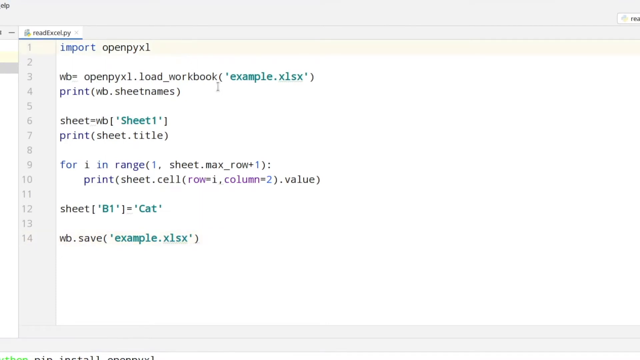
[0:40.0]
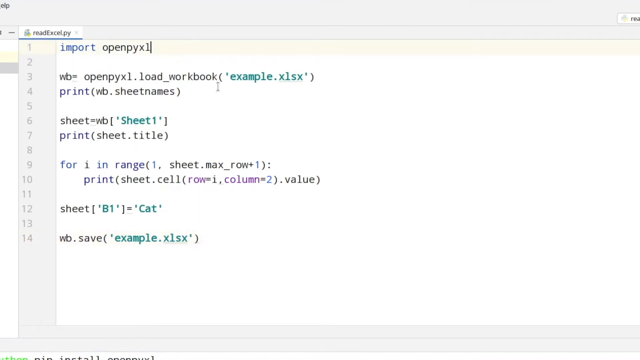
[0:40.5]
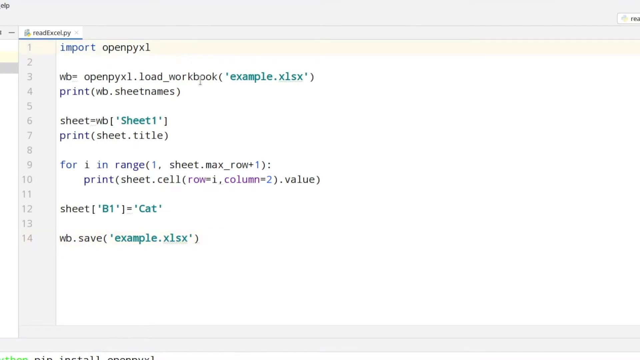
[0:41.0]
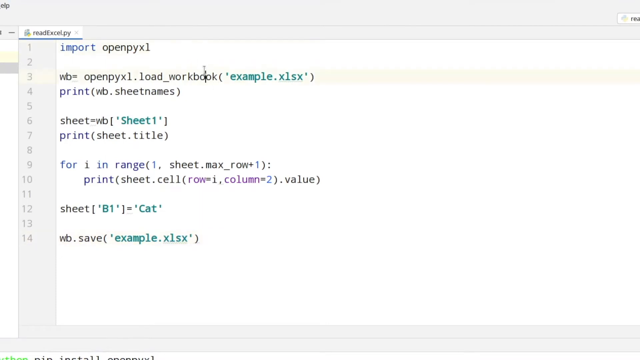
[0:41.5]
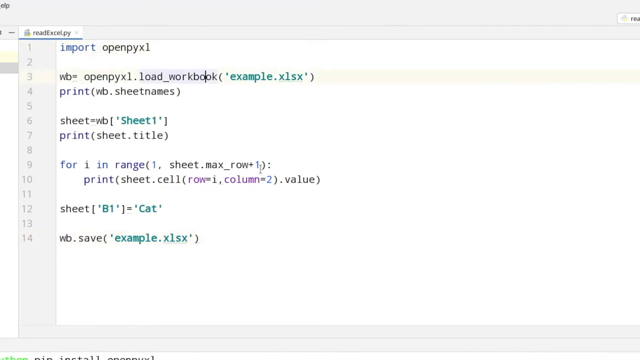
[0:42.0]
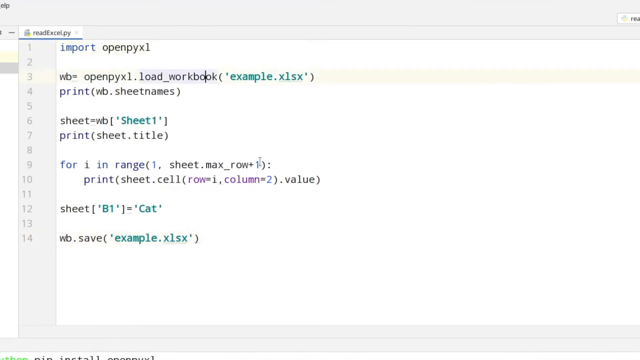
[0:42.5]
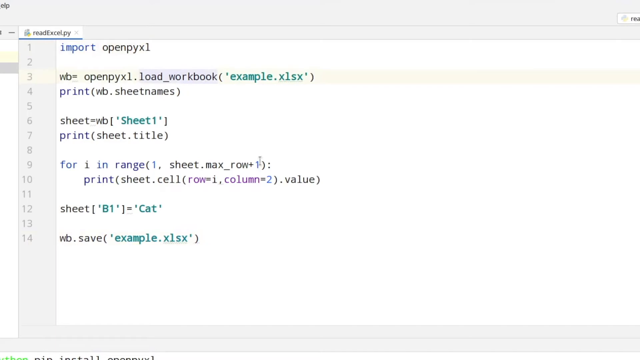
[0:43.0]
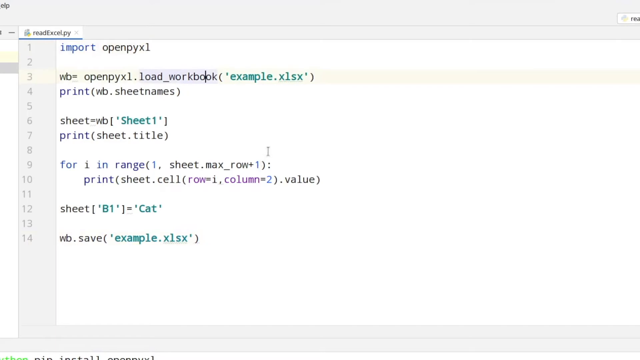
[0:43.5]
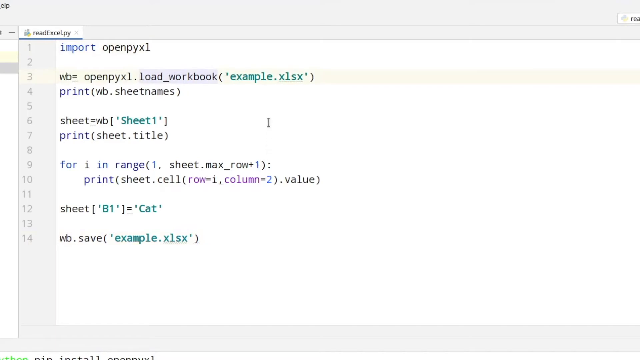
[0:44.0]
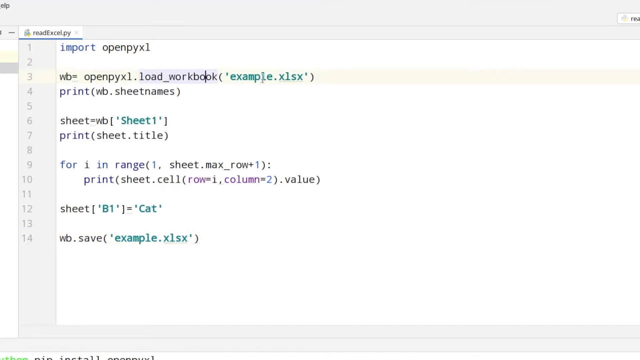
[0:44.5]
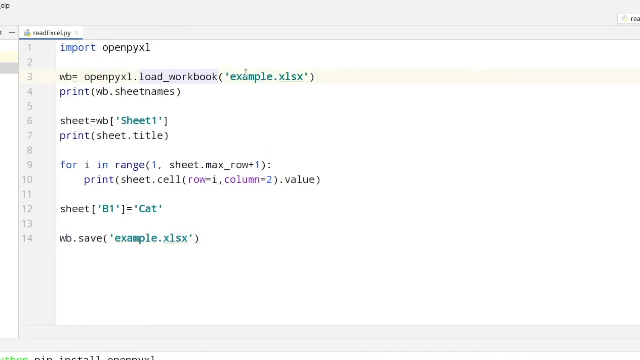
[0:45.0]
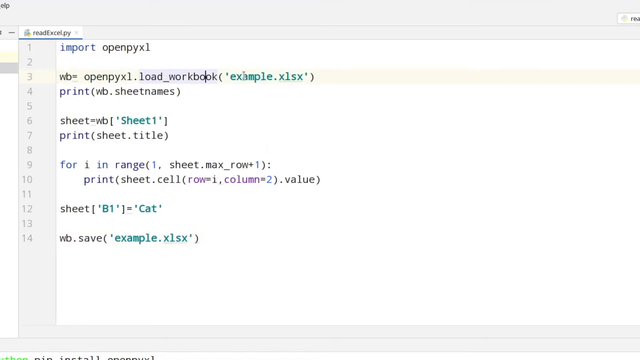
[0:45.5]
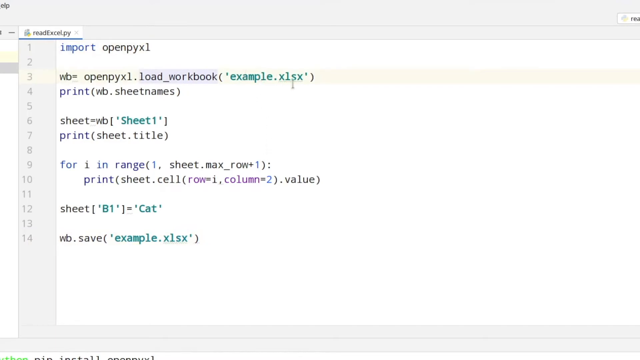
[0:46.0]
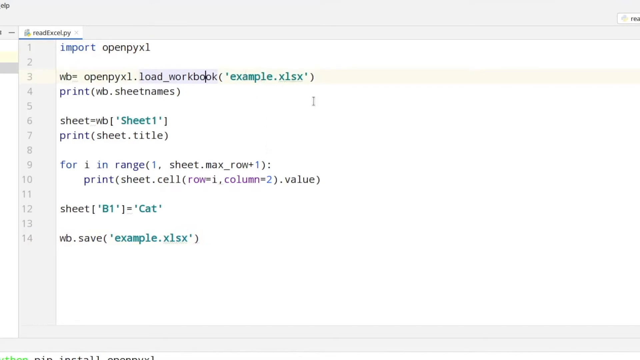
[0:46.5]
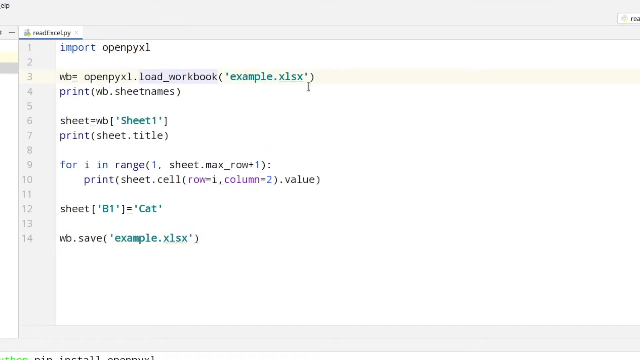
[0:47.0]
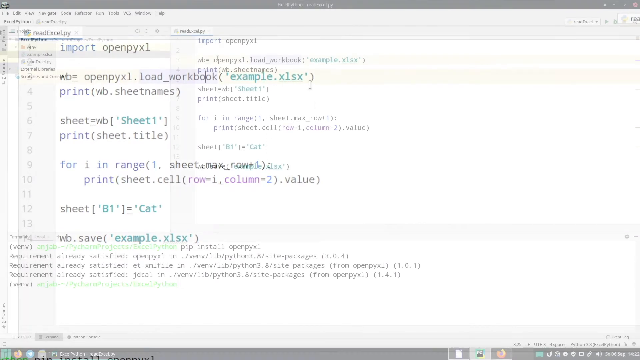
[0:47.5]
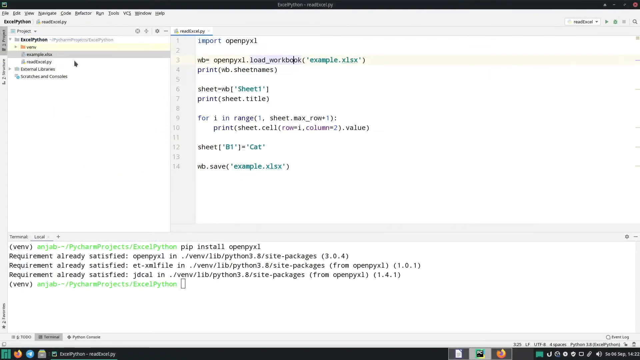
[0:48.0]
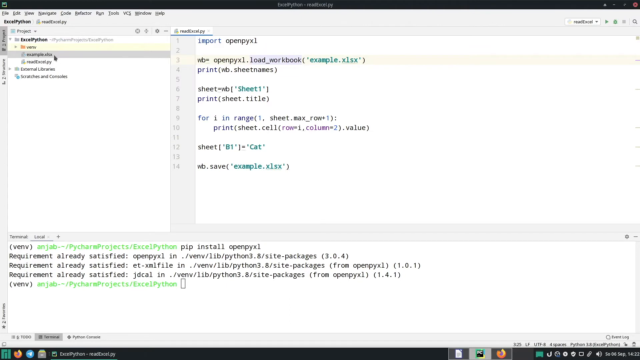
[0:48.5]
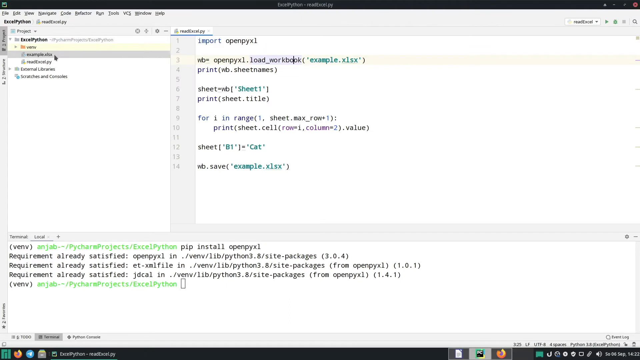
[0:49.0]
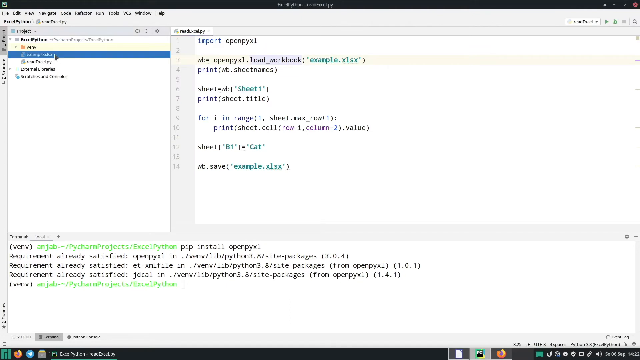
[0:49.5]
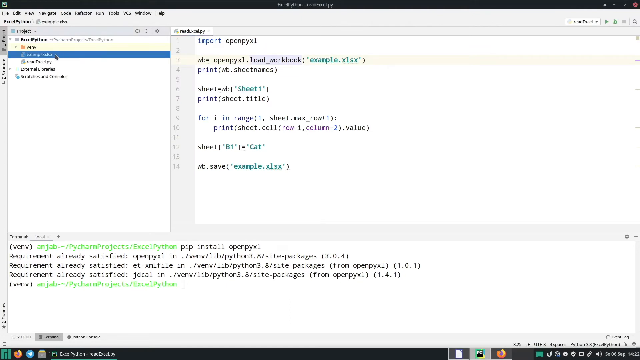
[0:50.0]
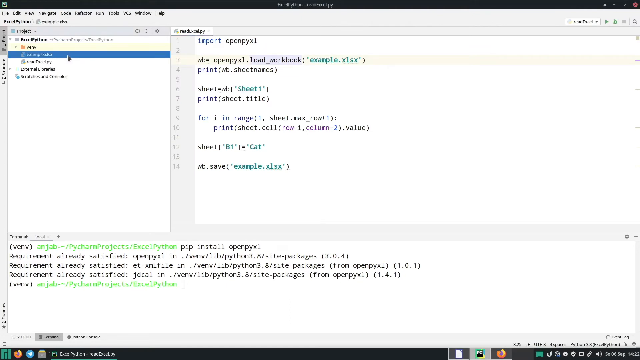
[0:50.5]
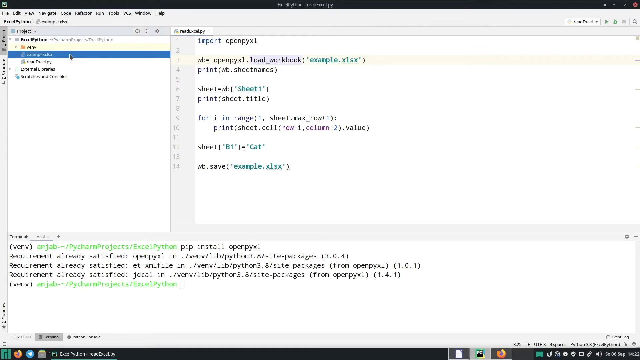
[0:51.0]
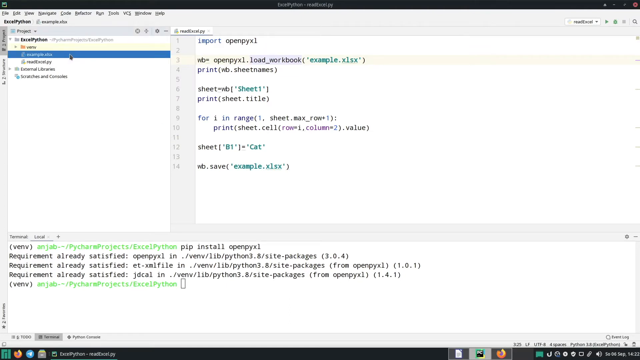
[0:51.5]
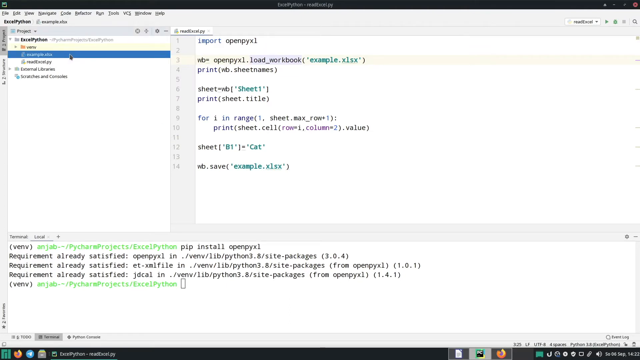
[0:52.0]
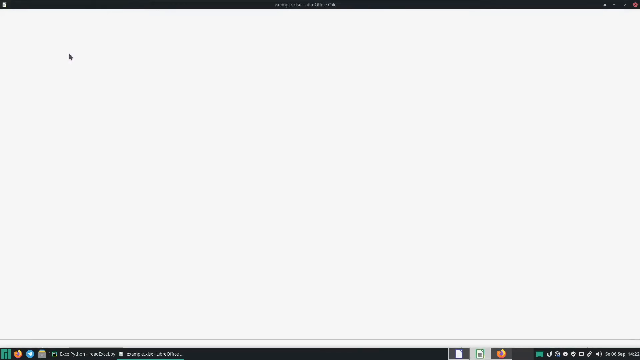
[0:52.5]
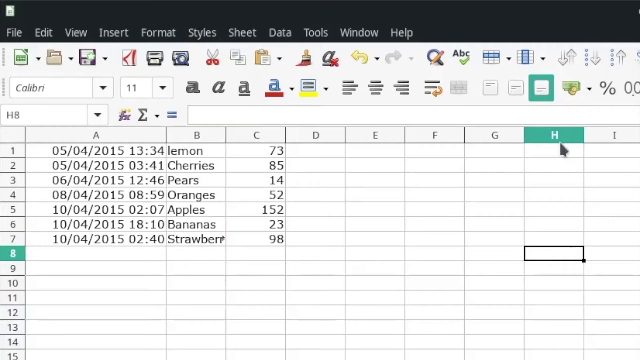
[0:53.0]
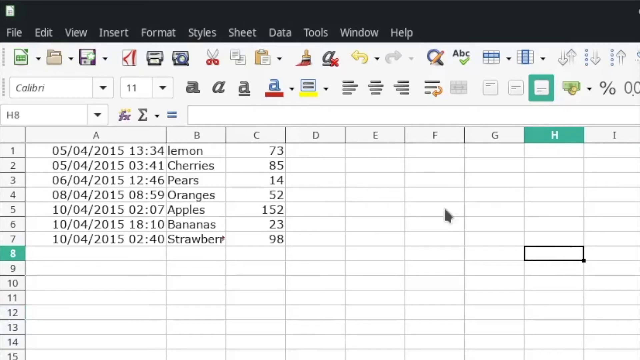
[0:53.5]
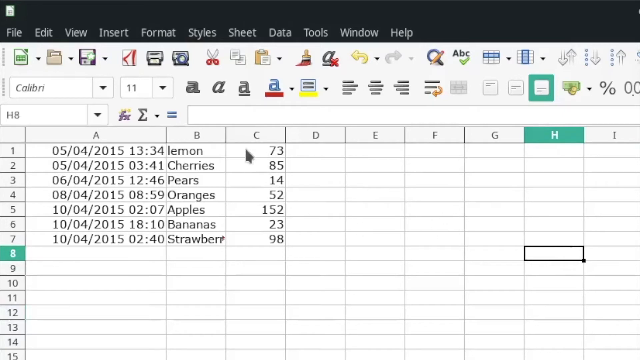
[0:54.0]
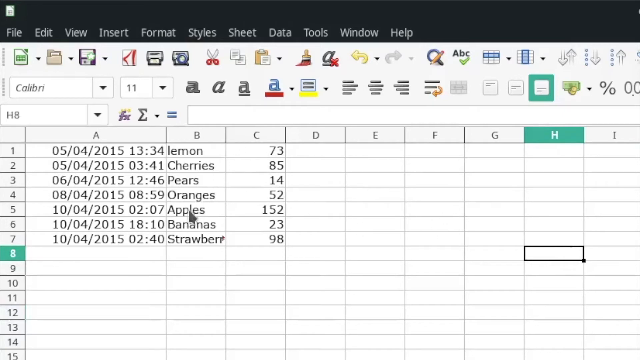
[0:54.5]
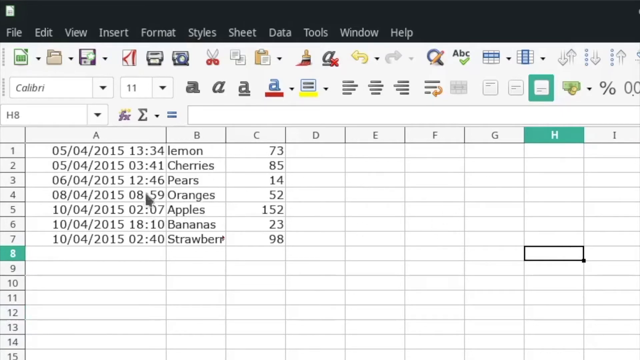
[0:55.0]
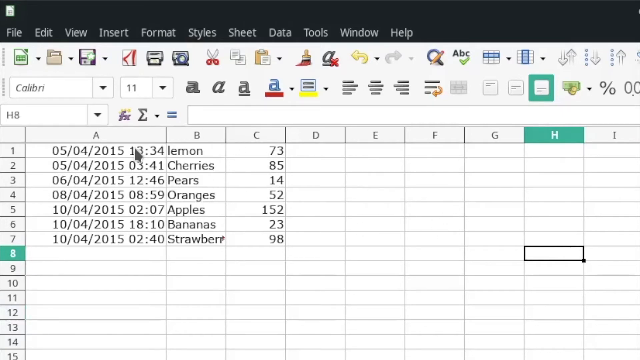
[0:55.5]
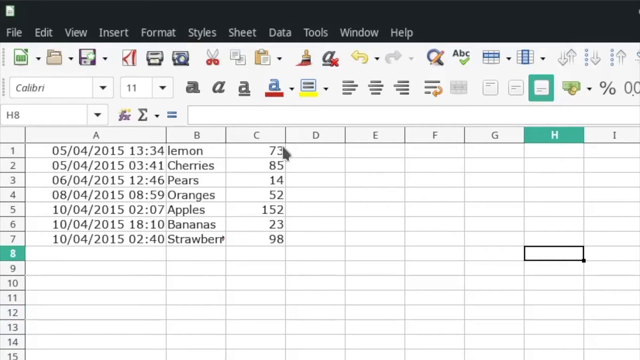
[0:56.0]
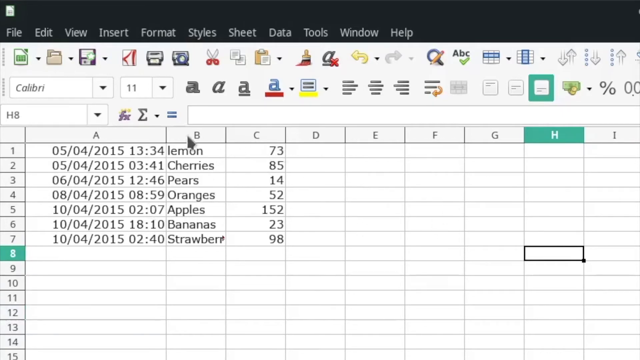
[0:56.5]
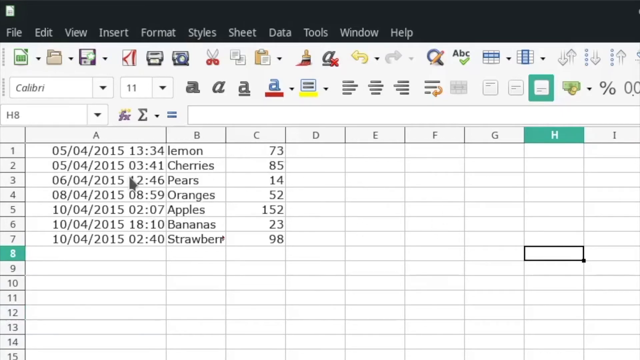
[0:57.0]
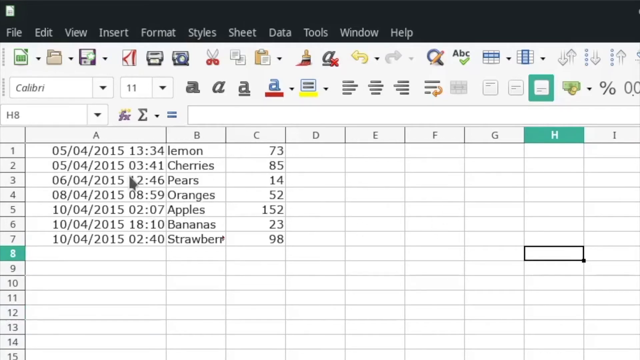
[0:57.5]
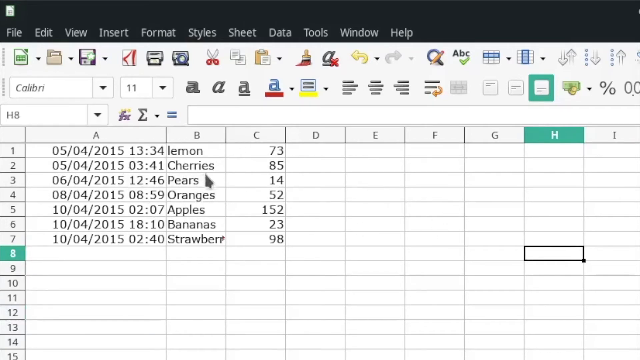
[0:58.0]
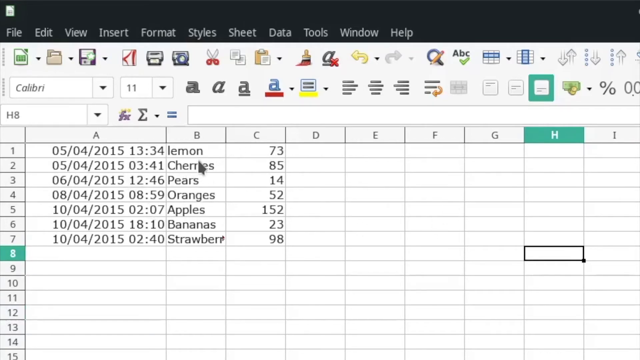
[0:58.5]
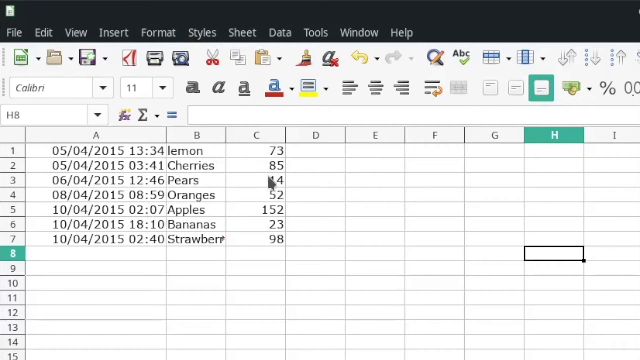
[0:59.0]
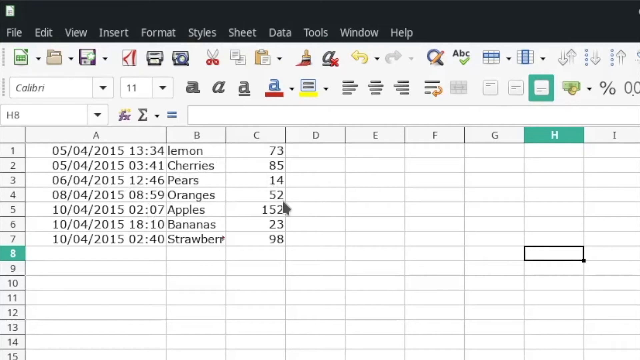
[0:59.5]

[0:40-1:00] A computer screen is divided into a left side and a right side. On the left is a small panel that says "Excel Python," with five clickable tabs underneath that are too small to read. To the right of the panel is a numbered list of lines from 1 to 14. Line 1 says "import openpyxl," and line 2 is bare. Line 3 says "wb openpyxl.load-workbook" with the word "example" in parentheses. Line 4 says "print" with "wb.sheetName" in parentheses. Line 5 is empty. Line 6 says "sheet wb" followed by "sheet" in green. Line 7 says "print" with "sheet.title" in parentheses. Line 8 is empty. Line 9 contains "in ranger" followed by text in parentheses, and underneath it says "print" with "sheet.cell.value" in parentheses. Line 11 is empty, line 12 is the word "sheet," line 13 is empty, and line 14 says "WB Save."